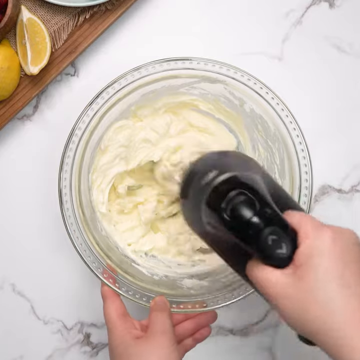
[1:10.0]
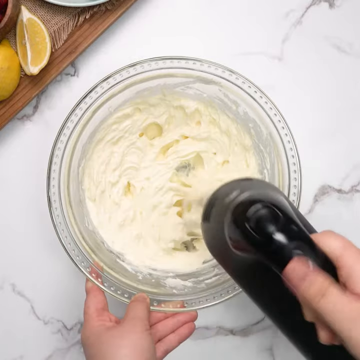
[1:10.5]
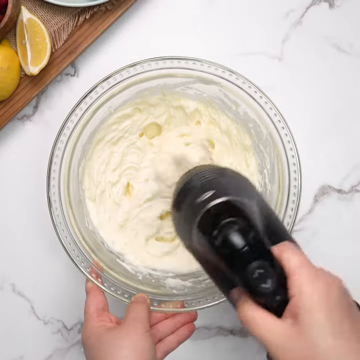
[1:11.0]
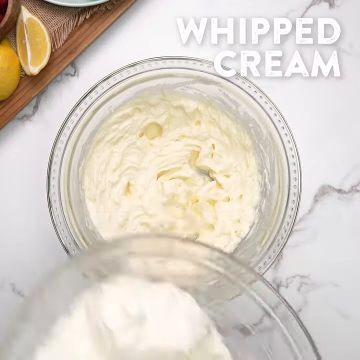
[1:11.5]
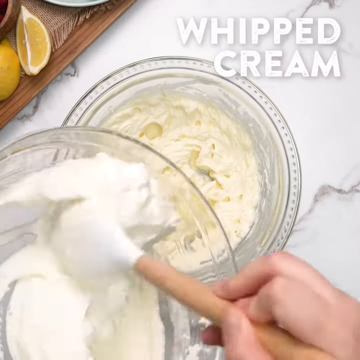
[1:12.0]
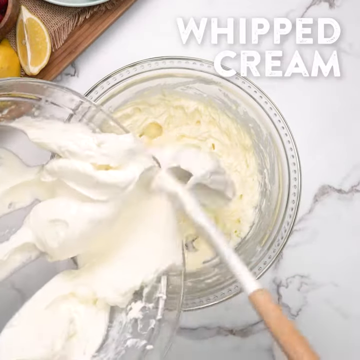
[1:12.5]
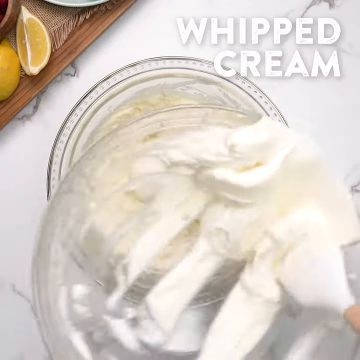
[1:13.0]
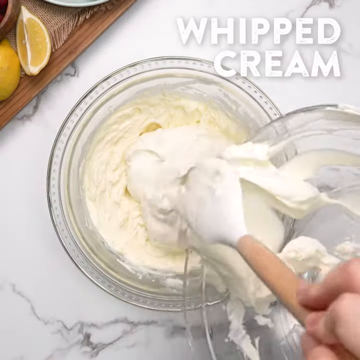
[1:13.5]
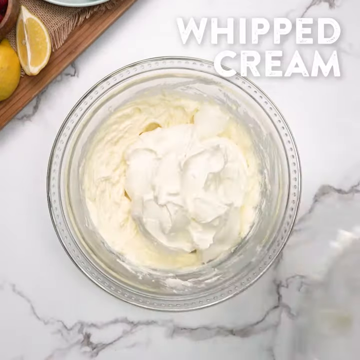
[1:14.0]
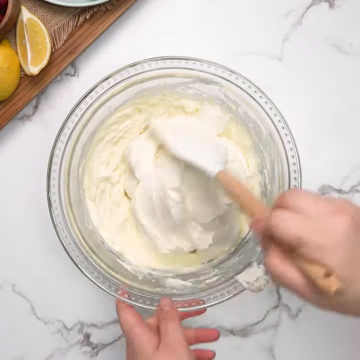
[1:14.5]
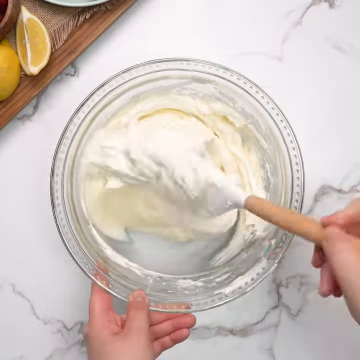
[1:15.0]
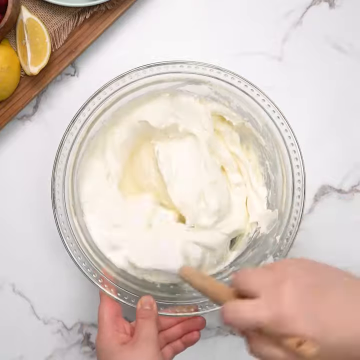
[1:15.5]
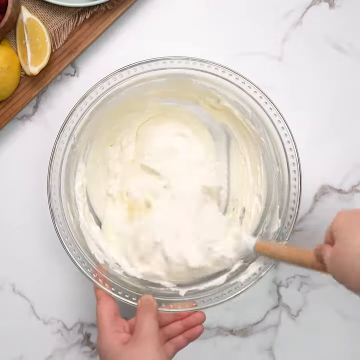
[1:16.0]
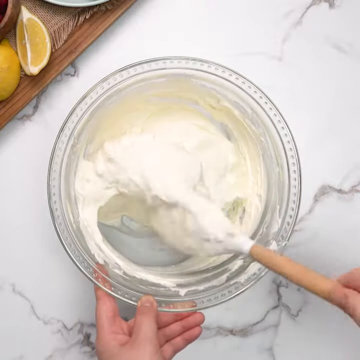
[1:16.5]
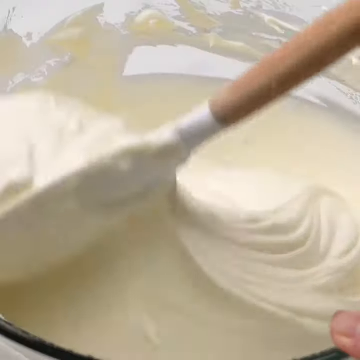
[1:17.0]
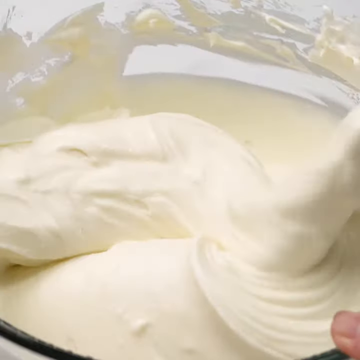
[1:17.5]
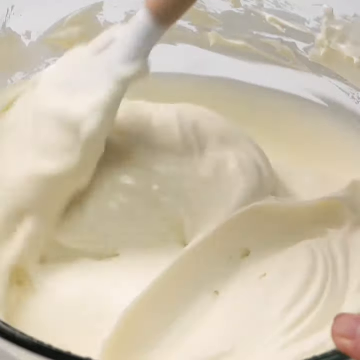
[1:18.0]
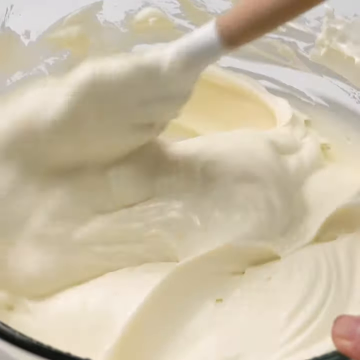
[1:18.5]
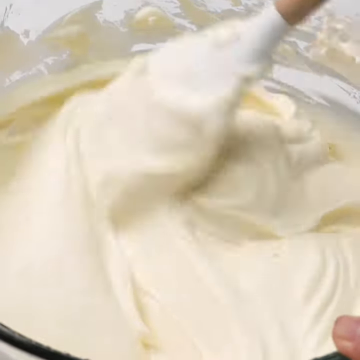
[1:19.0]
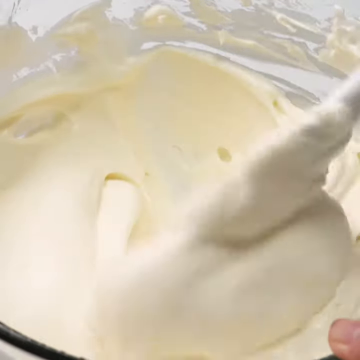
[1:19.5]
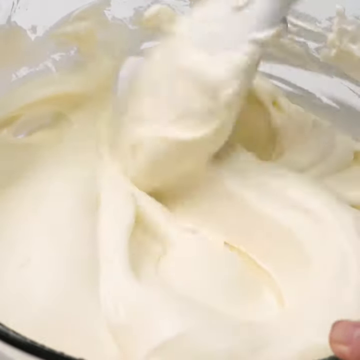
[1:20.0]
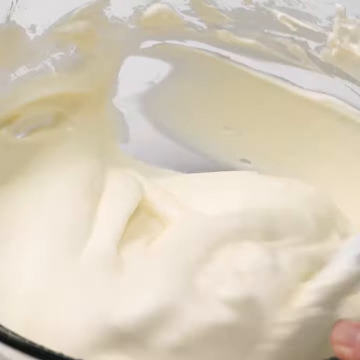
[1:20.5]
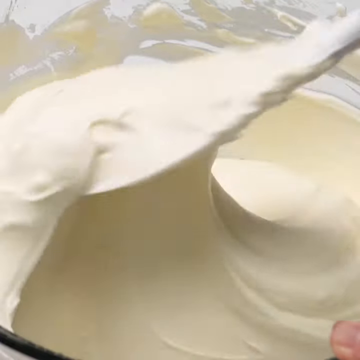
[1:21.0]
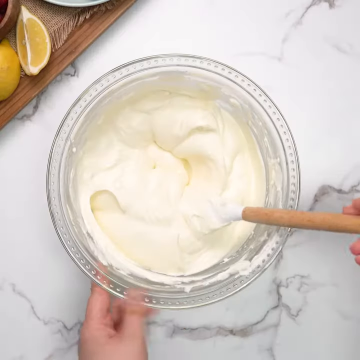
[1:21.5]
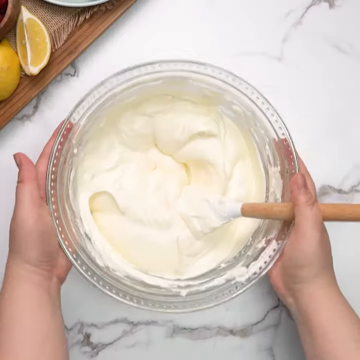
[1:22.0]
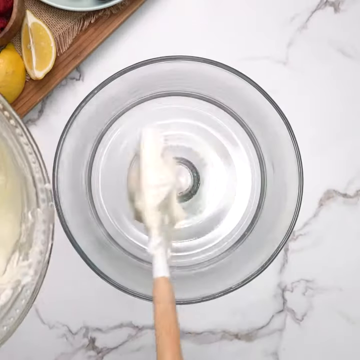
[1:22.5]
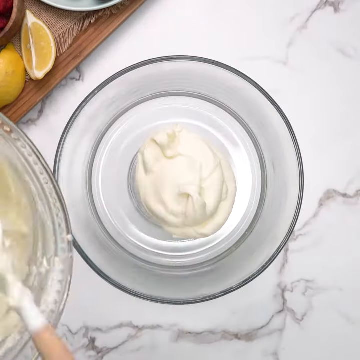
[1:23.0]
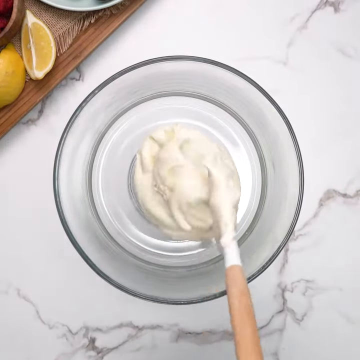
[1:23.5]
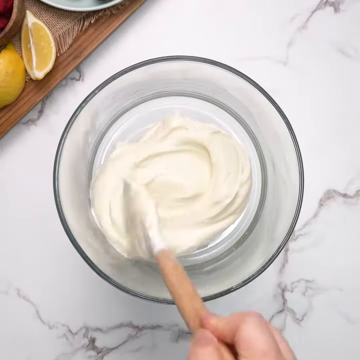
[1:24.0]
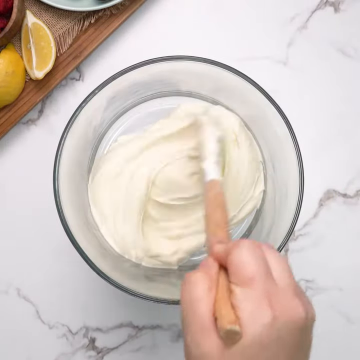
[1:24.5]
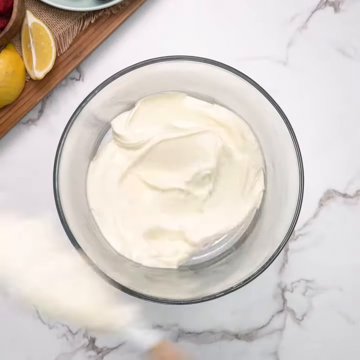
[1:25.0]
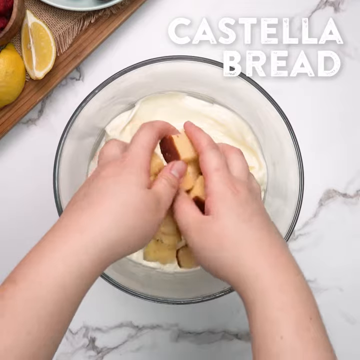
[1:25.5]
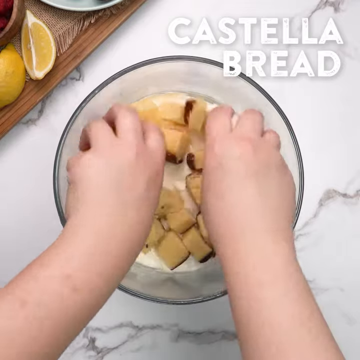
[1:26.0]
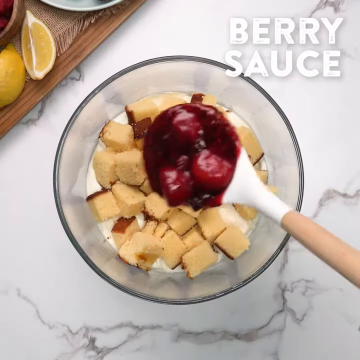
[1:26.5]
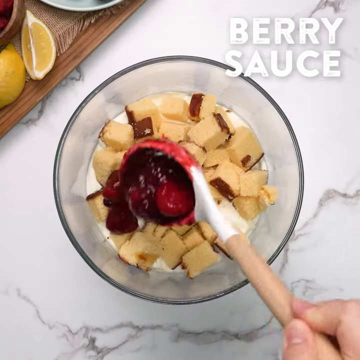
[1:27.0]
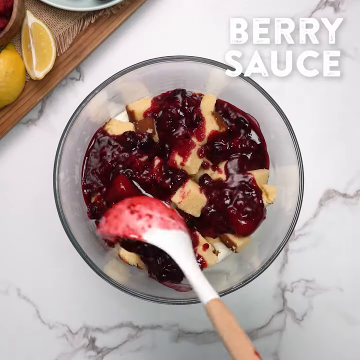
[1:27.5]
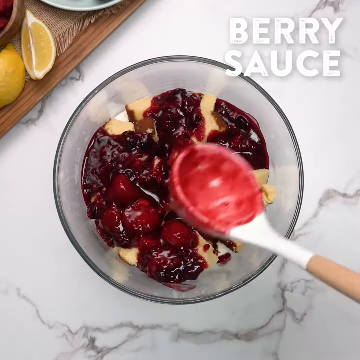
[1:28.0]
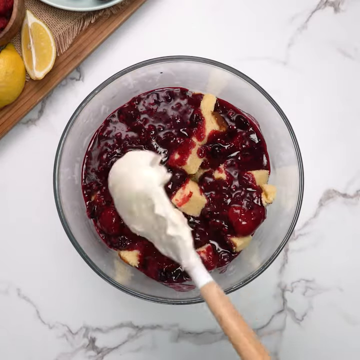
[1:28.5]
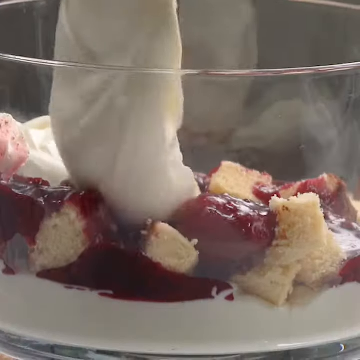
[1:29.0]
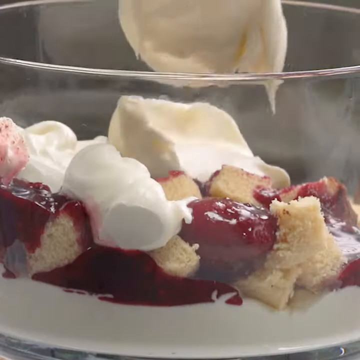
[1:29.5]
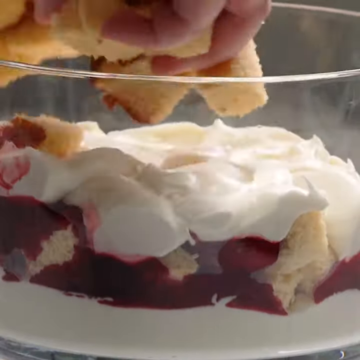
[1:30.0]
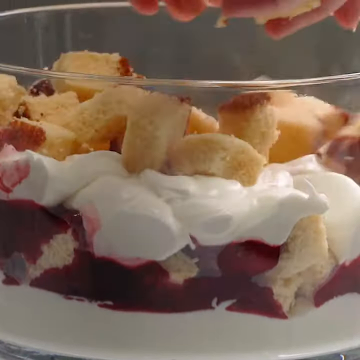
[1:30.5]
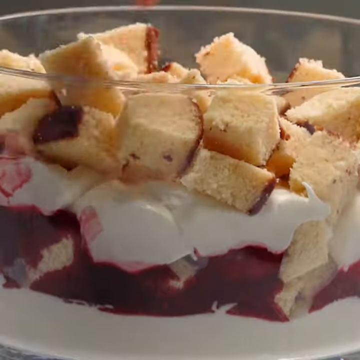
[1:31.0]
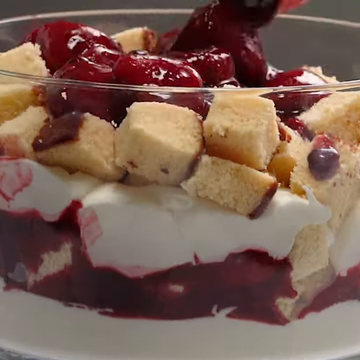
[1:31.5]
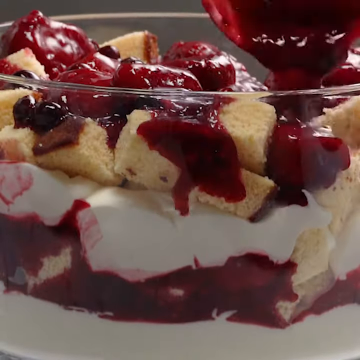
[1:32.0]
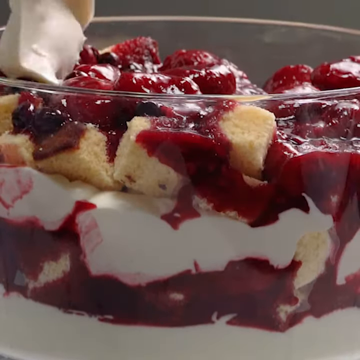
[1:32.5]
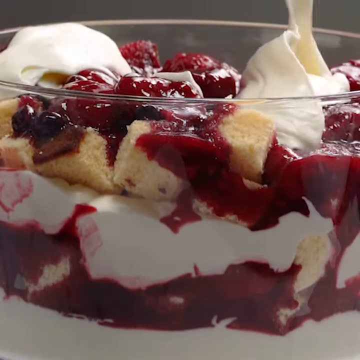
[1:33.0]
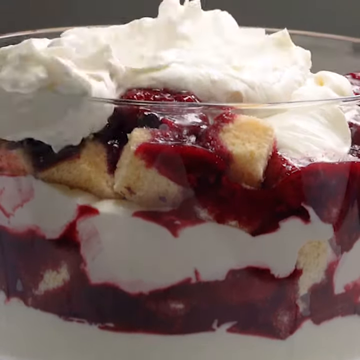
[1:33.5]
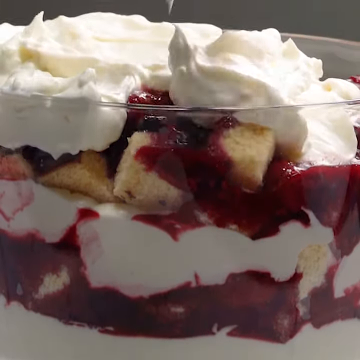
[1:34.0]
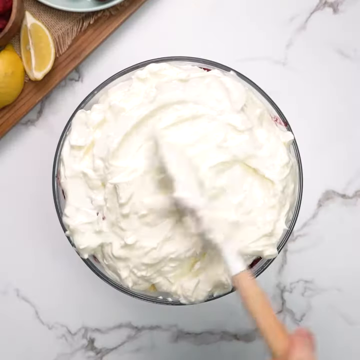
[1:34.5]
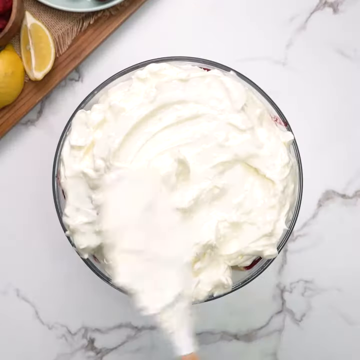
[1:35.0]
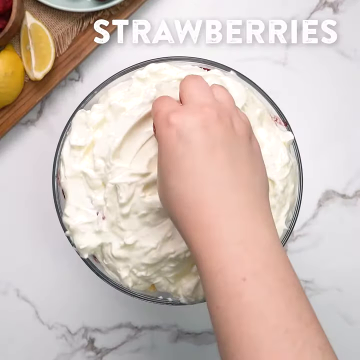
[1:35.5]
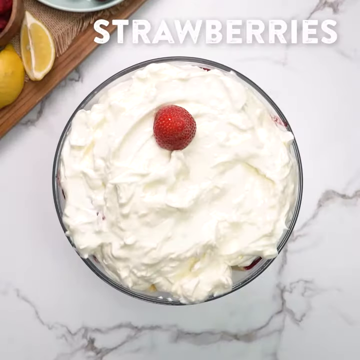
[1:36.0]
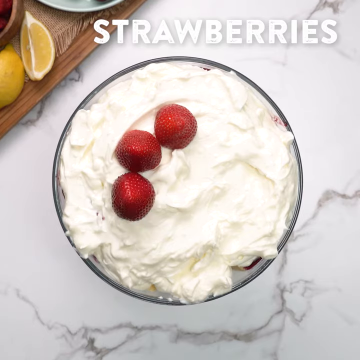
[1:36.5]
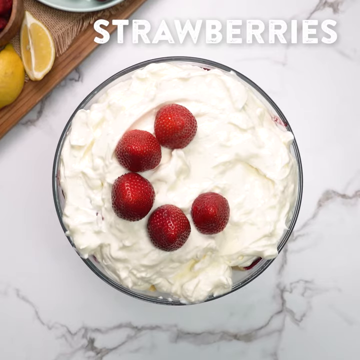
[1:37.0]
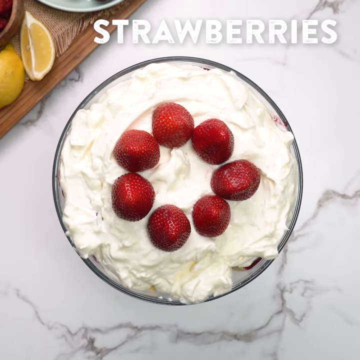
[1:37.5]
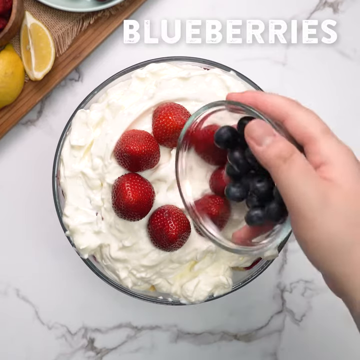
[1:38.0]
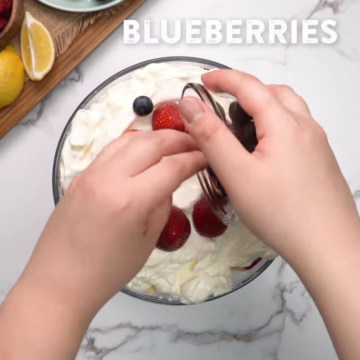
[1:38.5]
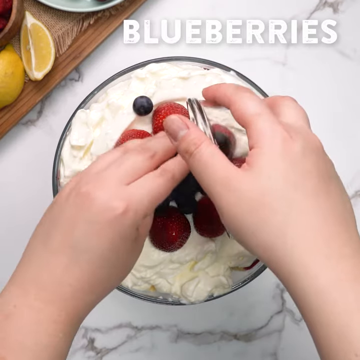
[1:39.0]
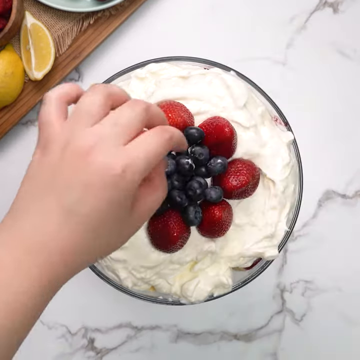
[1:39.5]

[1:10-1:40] A bowl is in the center of the screen on a white marble countertop, and part of a barely visible tray holding two sliced lemons is in the upper left-hand corner. A person uses a black mixer to mix ingredients in the bowl, then adds some whipped cream and mixes it in by hand with a wooden spatula. The camera zooms in for a close-up of the mixture. The mixture is then added to a separate plain bowl, and bread and berry sauce are added to the cream mixture. The person layers the cream on and adds more raspberry sauce on top. At the top of the bowl they add a last layer of the cream mixture, then place strawberries in a circular pattern in the middle of the bowl before putting blueberries in the middle of the strawberries.